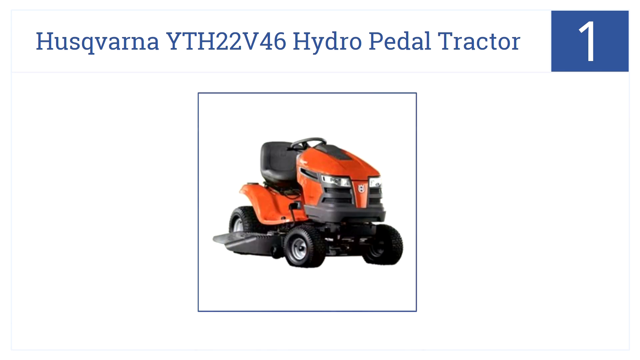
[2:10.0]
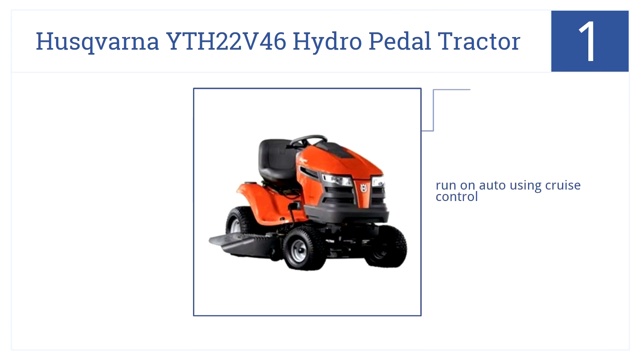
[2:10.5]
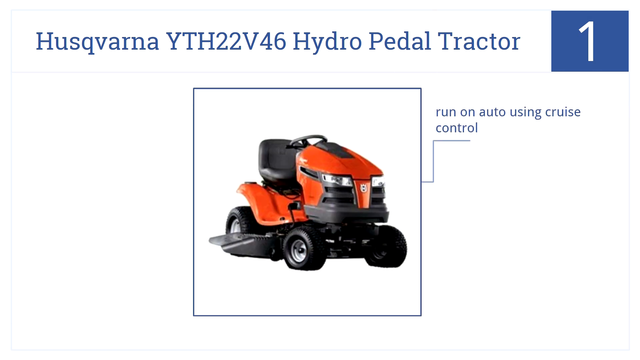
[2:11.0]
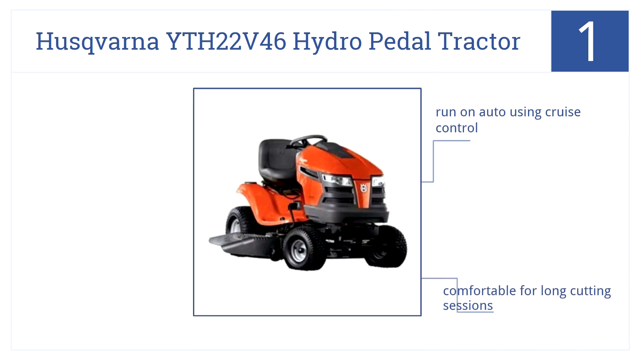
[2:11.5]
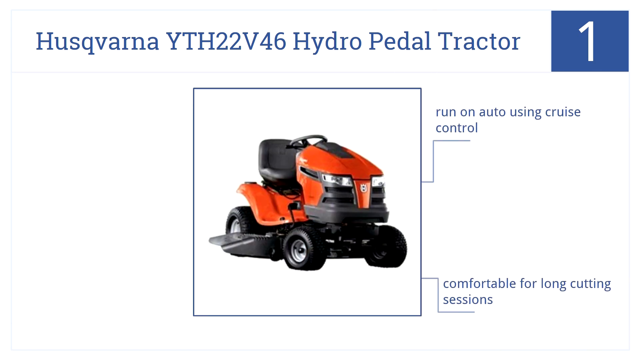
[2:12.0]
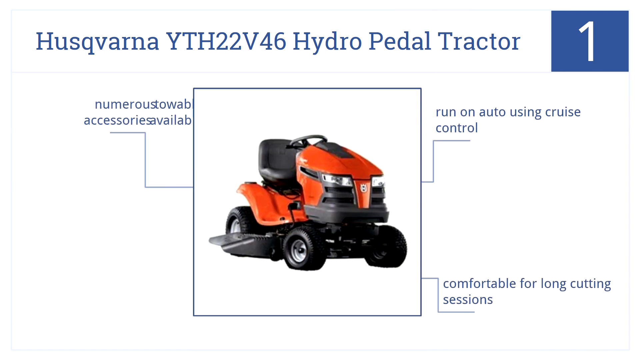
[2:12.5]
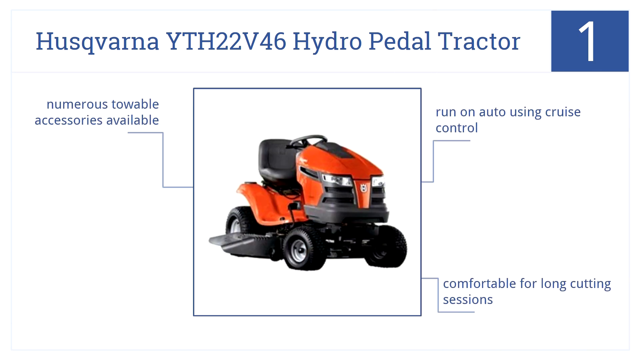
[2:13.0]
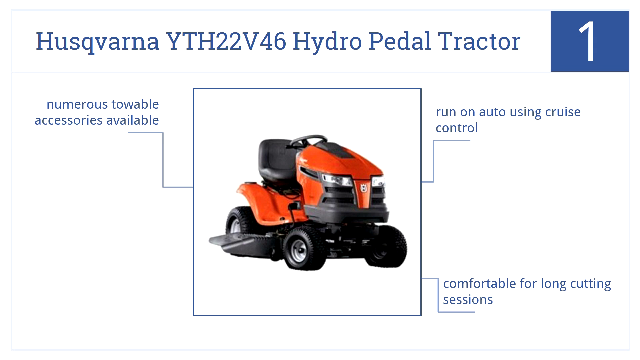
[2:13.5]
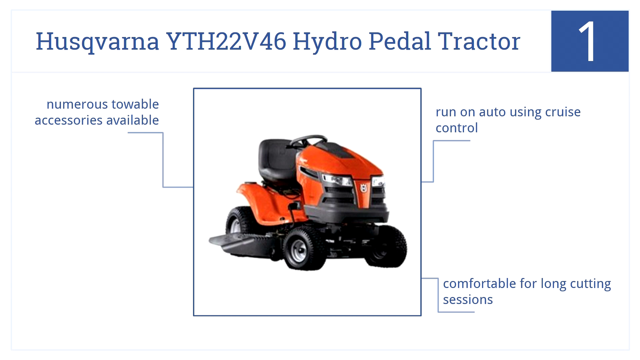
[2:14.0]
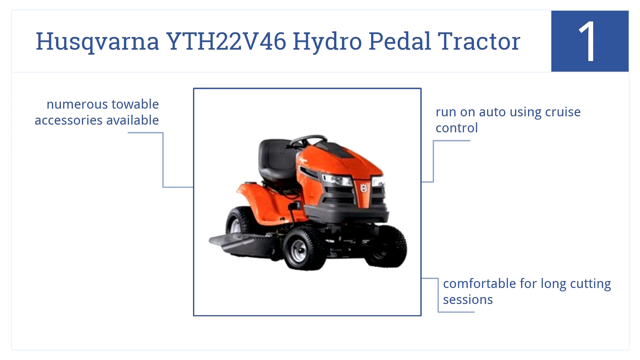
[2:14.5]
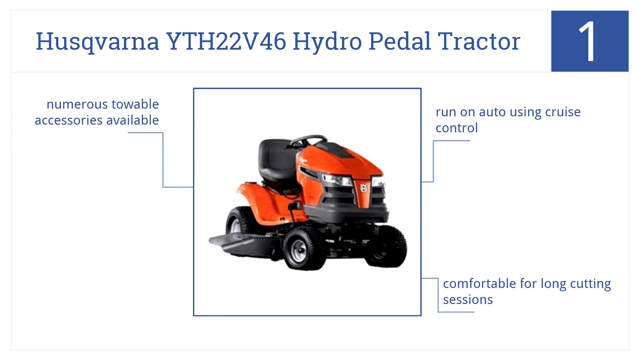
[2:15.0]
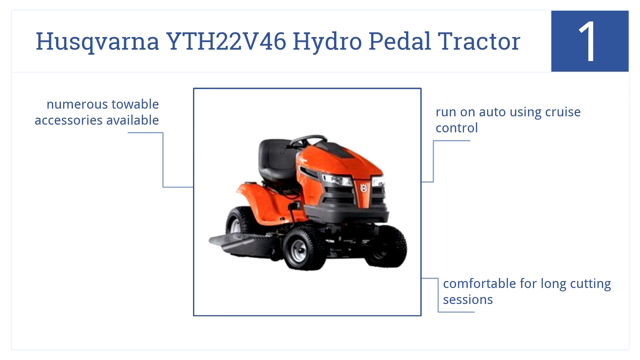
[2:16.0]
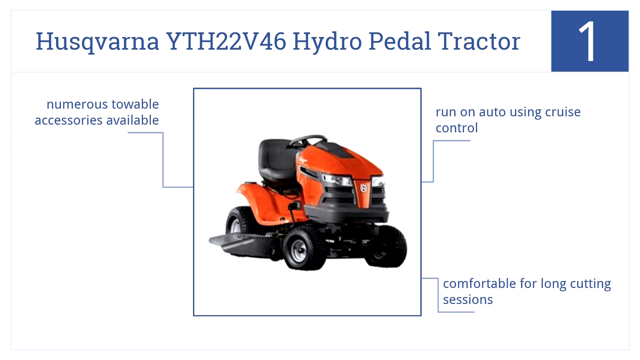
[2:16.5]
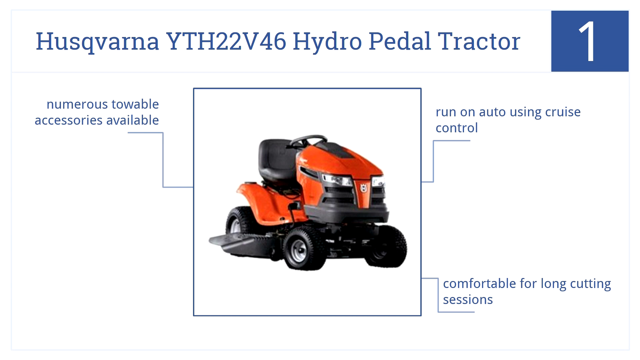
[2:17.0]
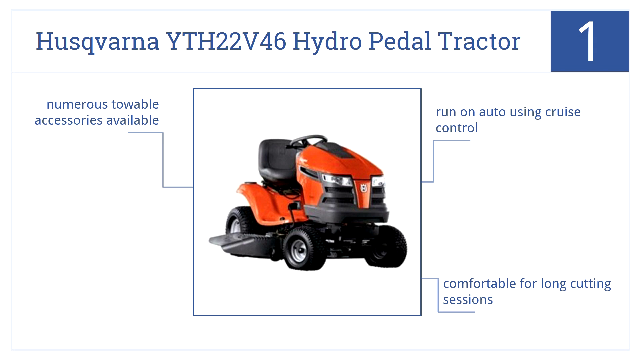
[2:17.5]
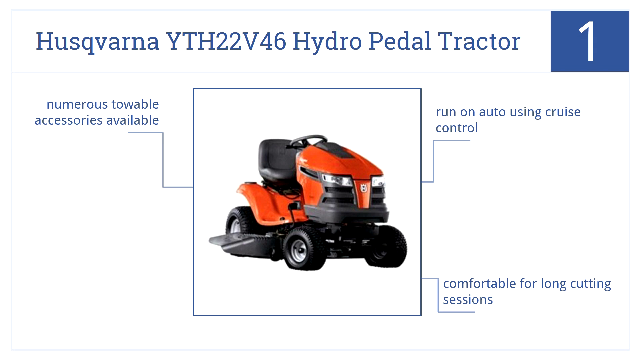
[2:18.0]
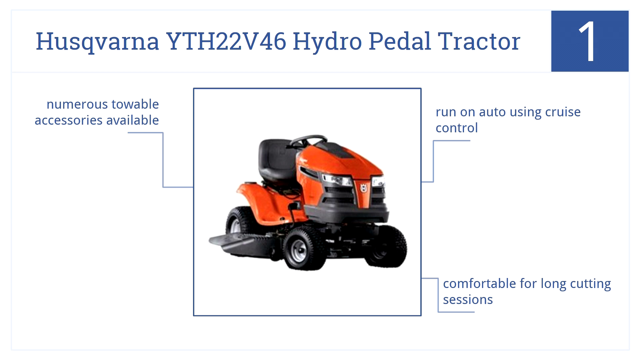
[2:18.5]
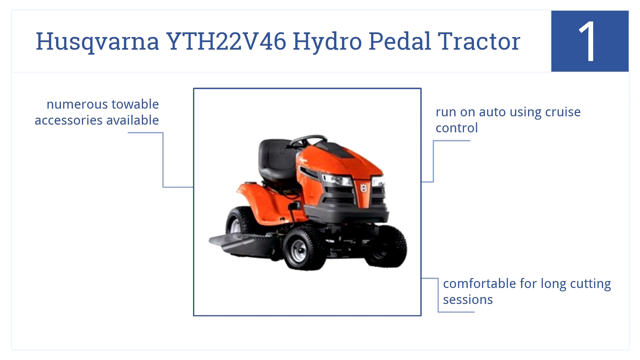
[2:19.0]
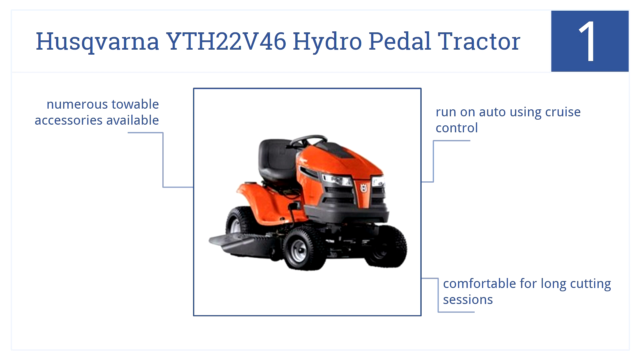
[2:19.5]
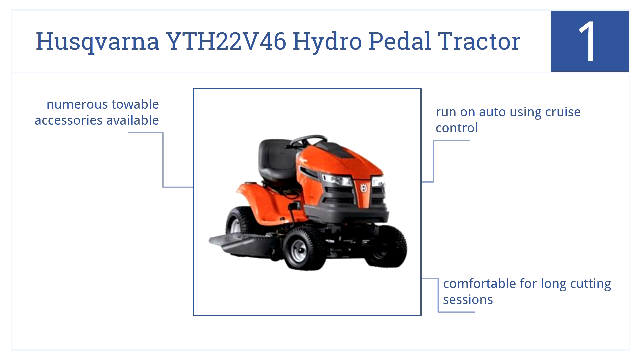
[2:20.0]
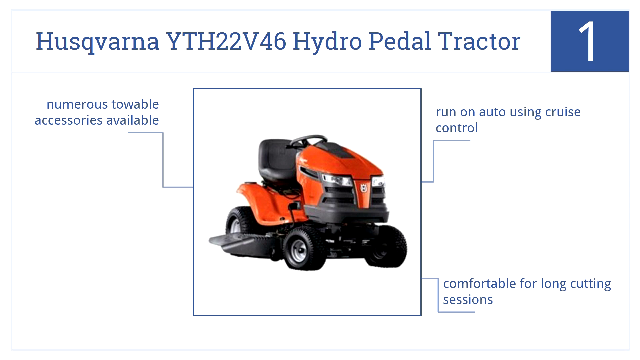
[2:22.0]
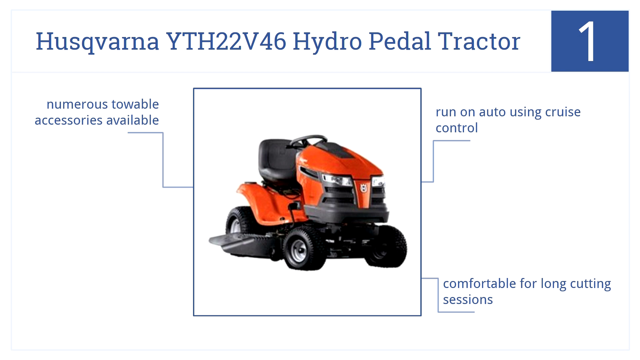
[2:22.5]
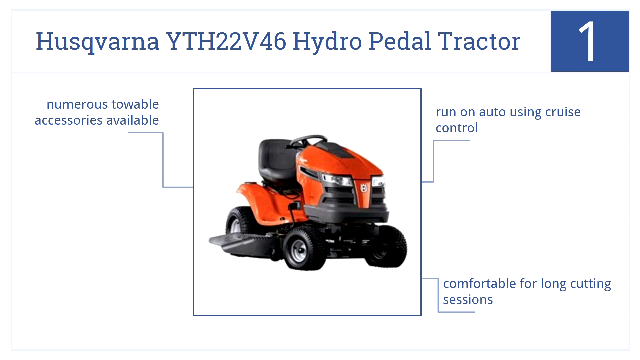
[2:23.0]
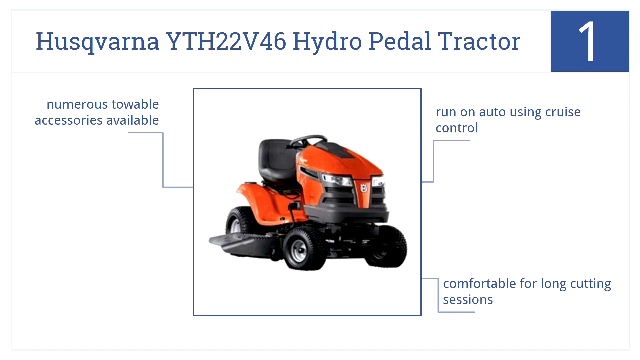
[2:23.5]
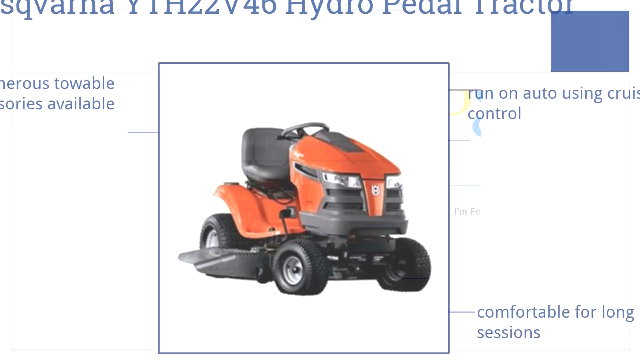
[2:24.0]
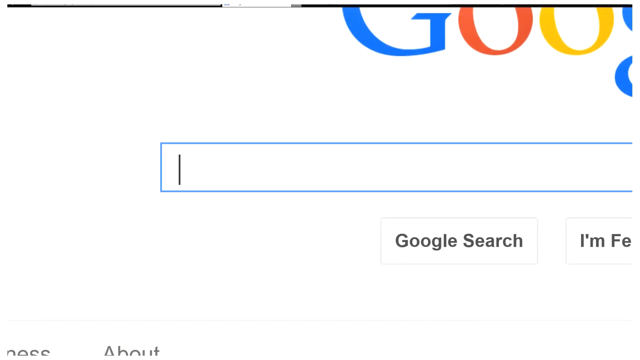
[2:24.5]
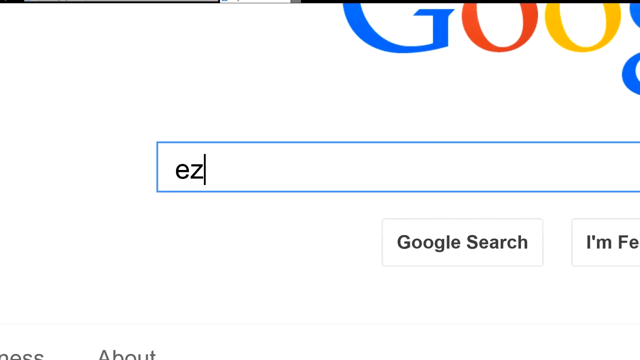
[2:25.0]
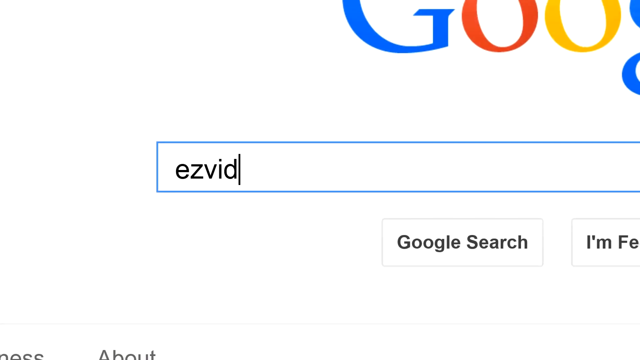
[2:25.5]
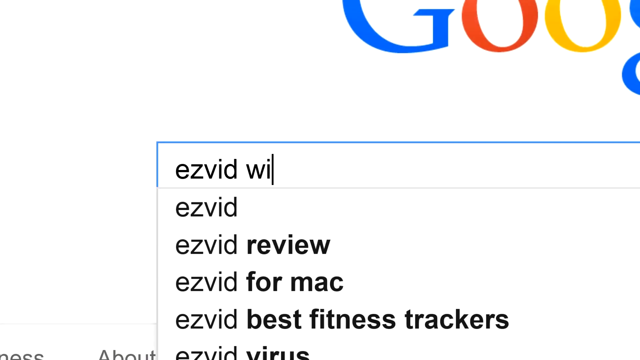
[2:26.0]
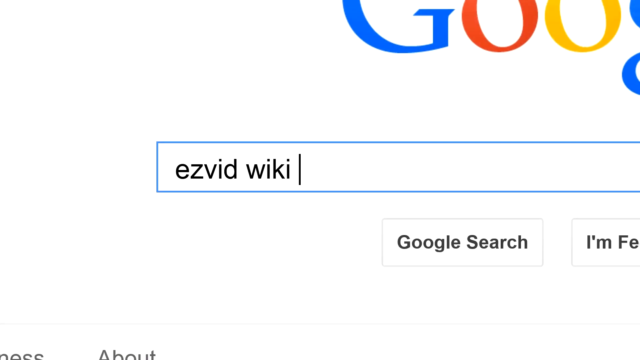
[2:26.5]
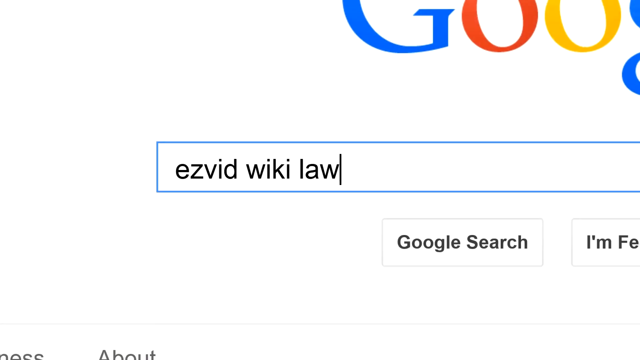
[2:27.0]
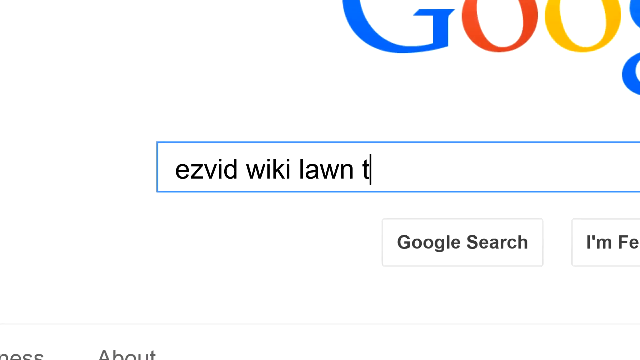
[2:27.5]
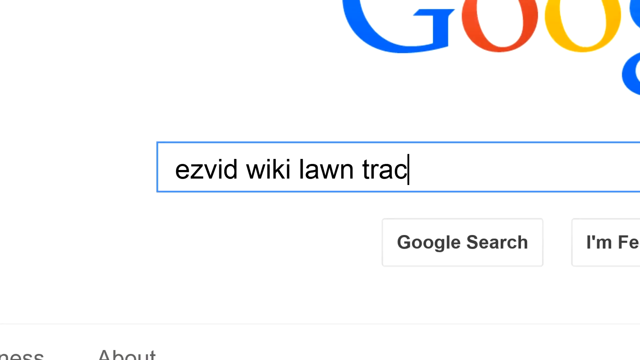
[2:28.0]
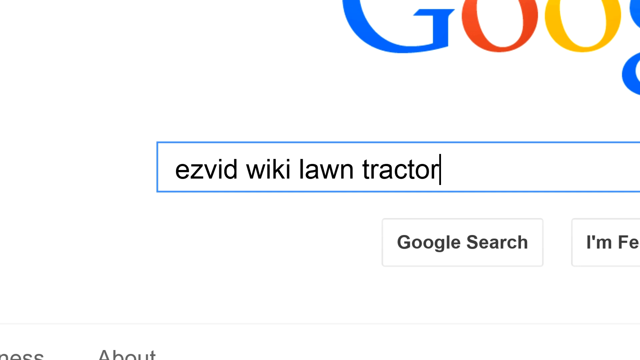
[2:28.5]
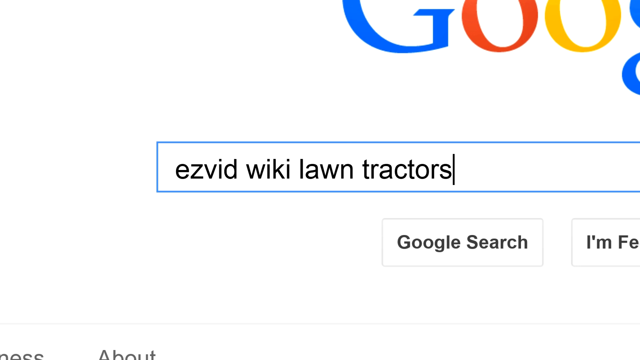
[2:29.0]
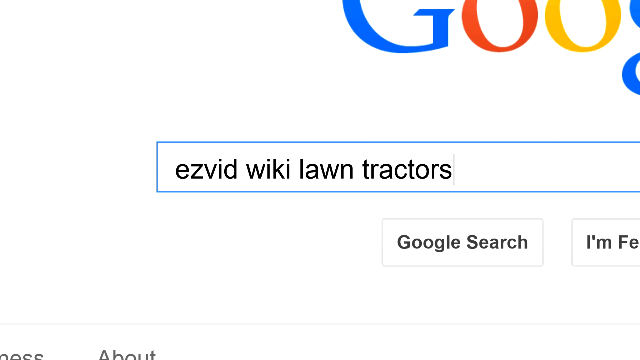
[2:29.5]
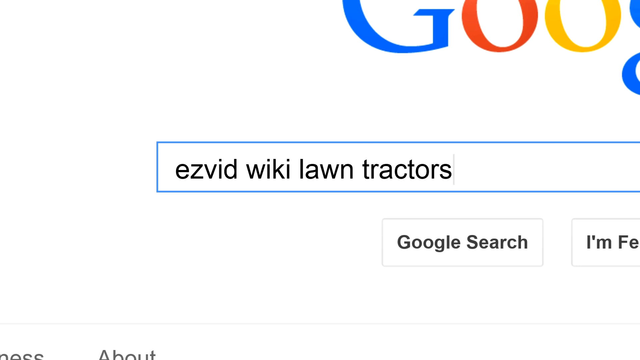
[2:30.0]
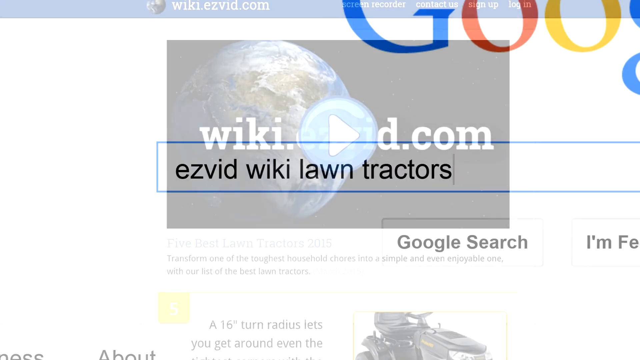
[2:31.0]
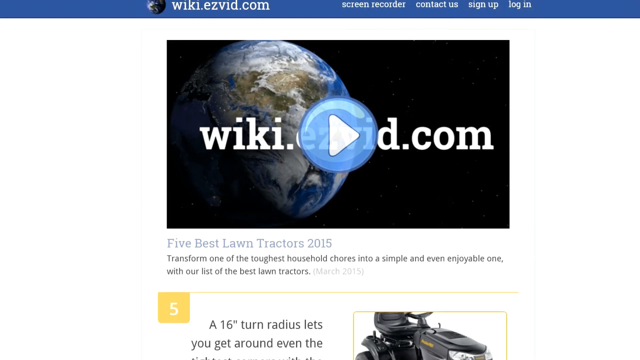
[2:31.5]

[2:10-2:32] The red-orange tractor is shown with the blue logo on the top right bearing a white number 1 and blue text on the top left reading "Husqvarna BYTH Hydro Pedal Tractor." Blue text appears around the tractor reading "numerous towable accessories available," "begins on auto," "uses cruise control," and "comfortable for long cutting sessions," all connected by pointers to the tractor. This remains on screen until a fade transition with a zoom effect makes everything disappear, revealing another Google search with the Google logo on the top right and the cursor in the search box. "EZVid Wiki Lawn Tractors" is typed in. The website with the earth seen earlier is shown again, with a blue home bar at the very top, an earth on a black background, white text repeating the website's name, and a yellow number with text.